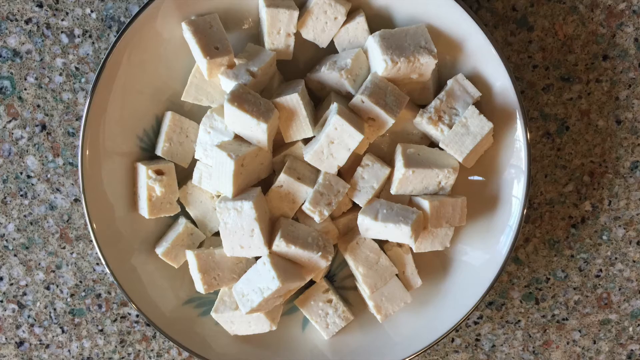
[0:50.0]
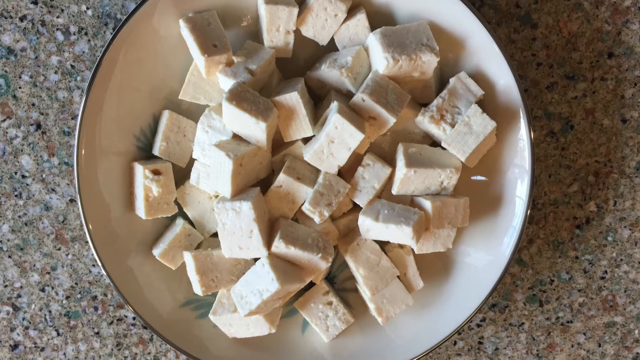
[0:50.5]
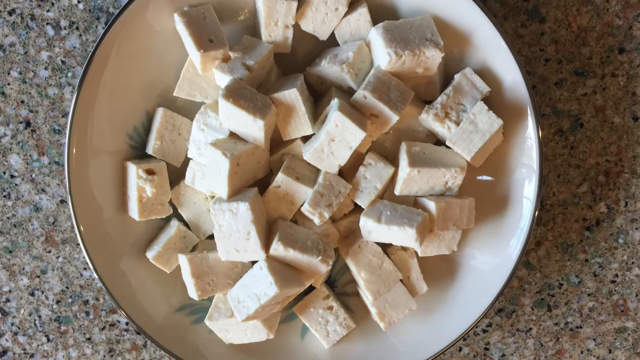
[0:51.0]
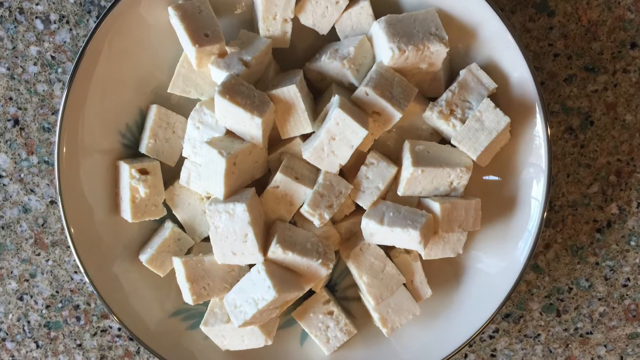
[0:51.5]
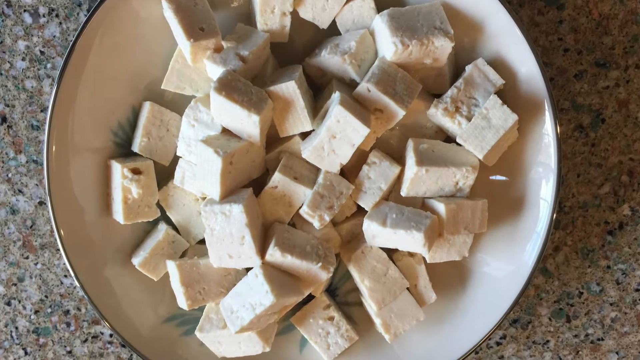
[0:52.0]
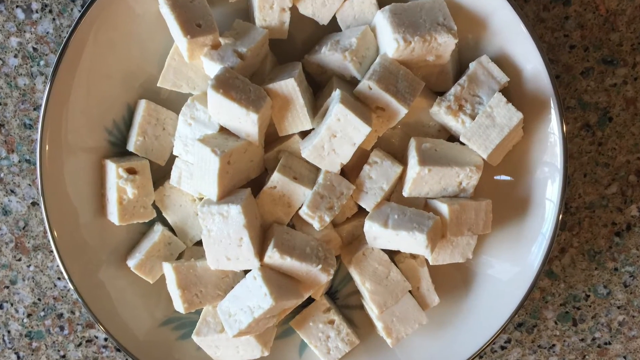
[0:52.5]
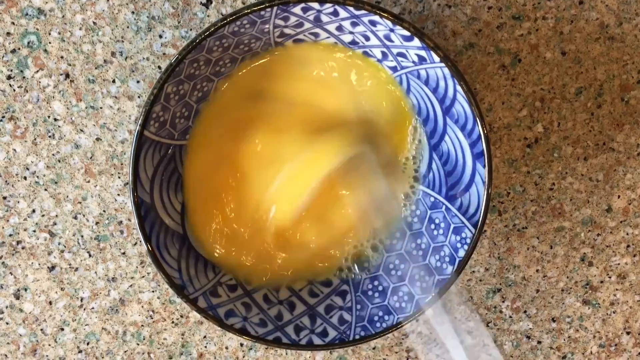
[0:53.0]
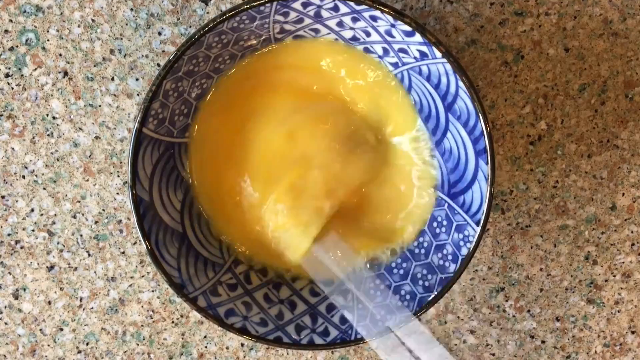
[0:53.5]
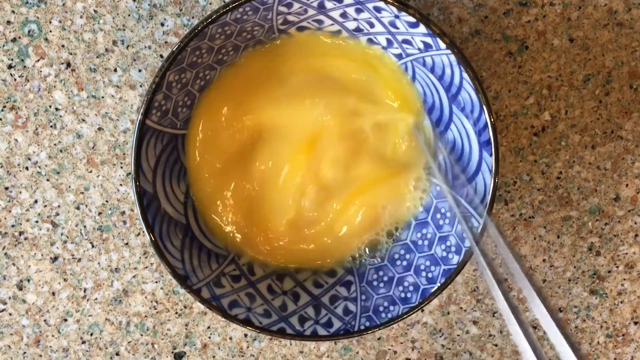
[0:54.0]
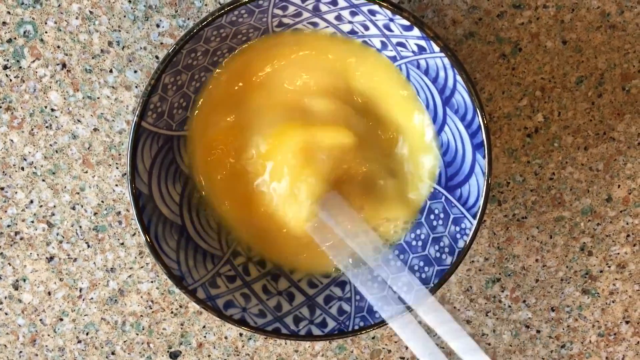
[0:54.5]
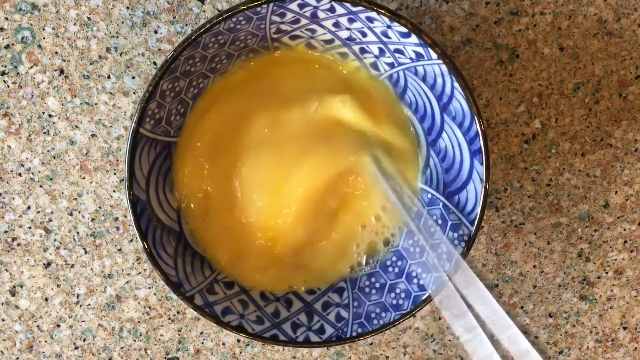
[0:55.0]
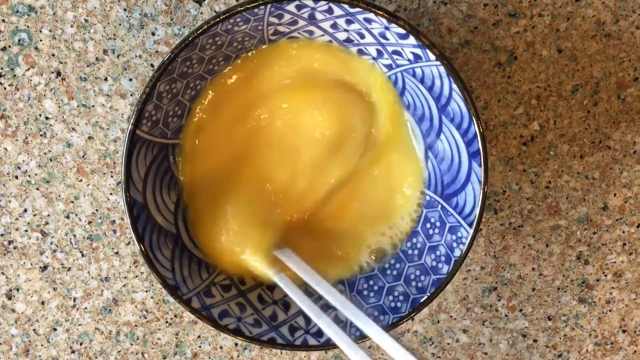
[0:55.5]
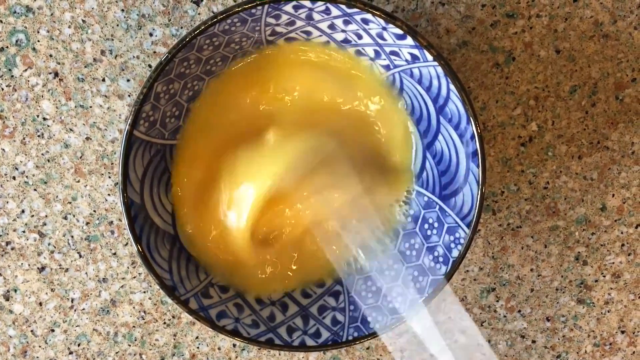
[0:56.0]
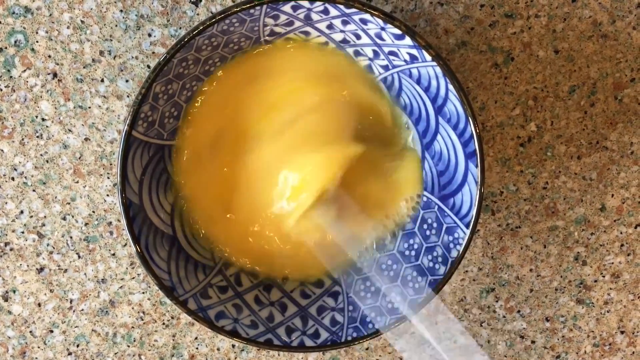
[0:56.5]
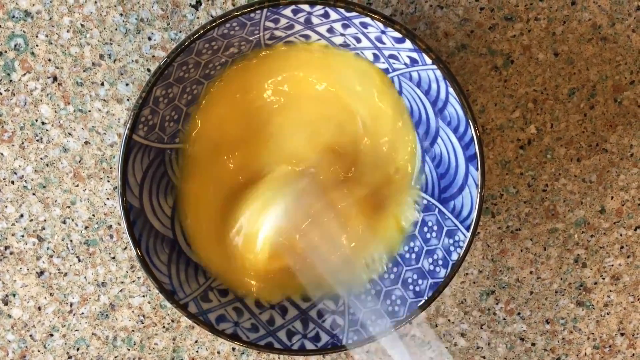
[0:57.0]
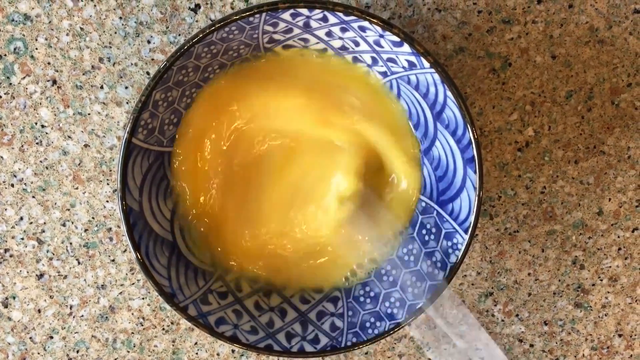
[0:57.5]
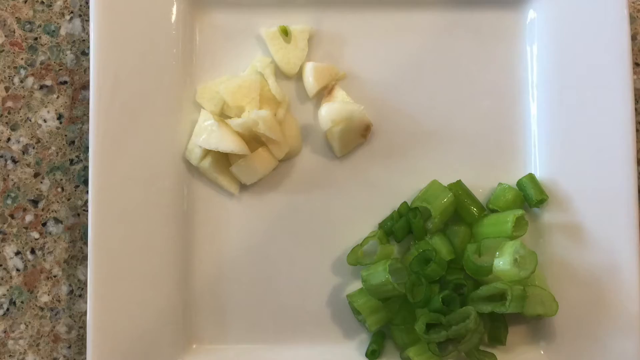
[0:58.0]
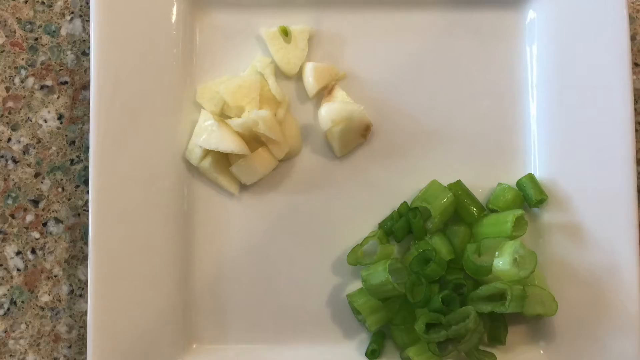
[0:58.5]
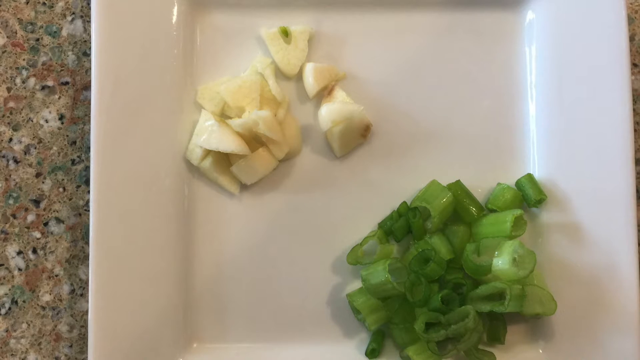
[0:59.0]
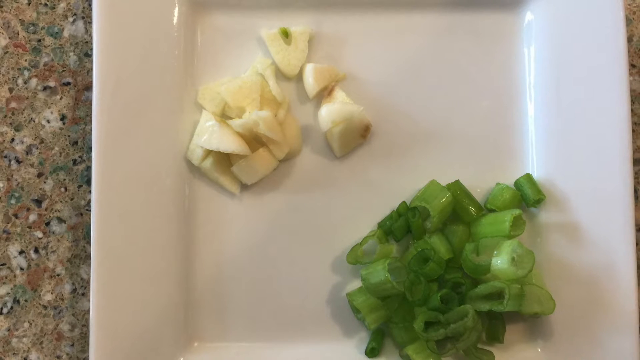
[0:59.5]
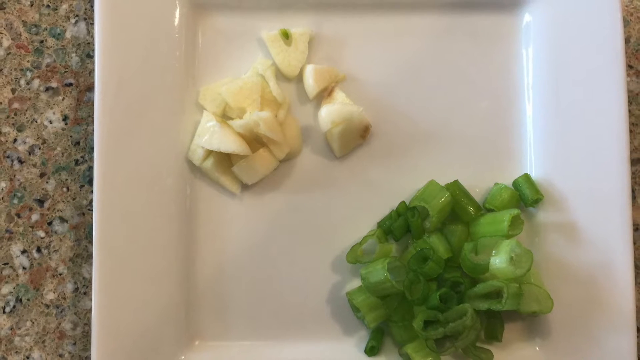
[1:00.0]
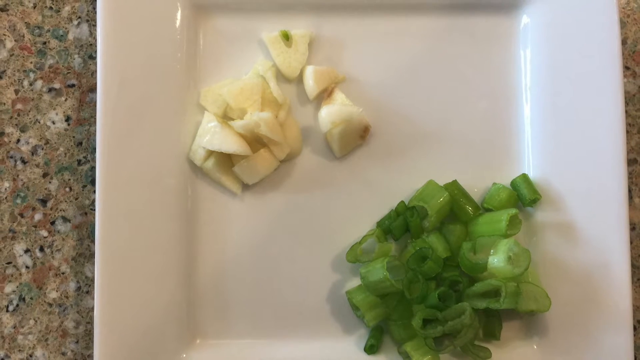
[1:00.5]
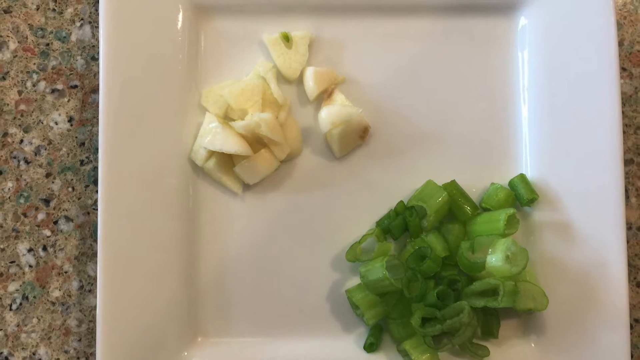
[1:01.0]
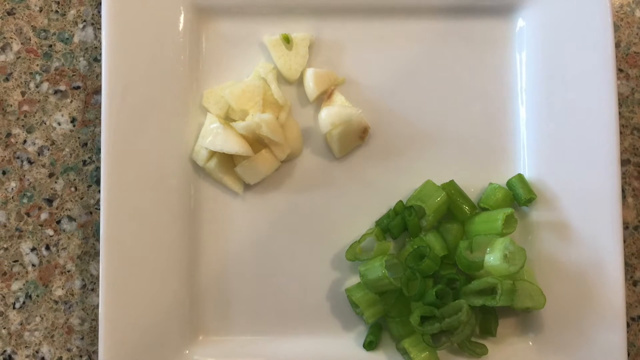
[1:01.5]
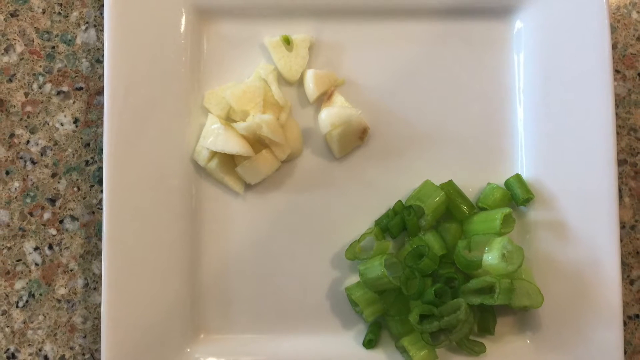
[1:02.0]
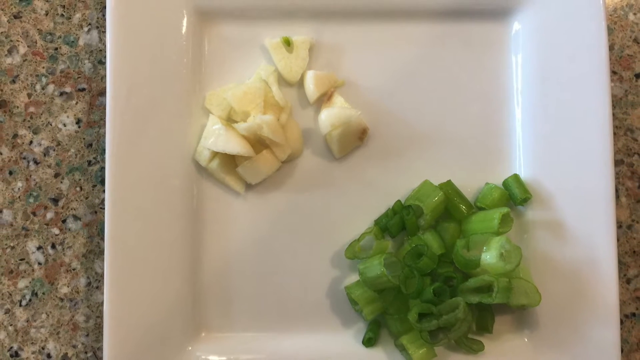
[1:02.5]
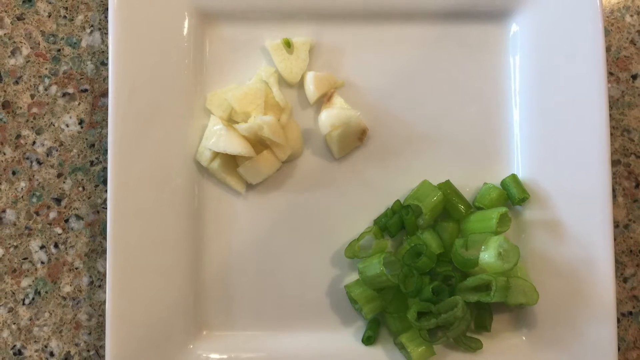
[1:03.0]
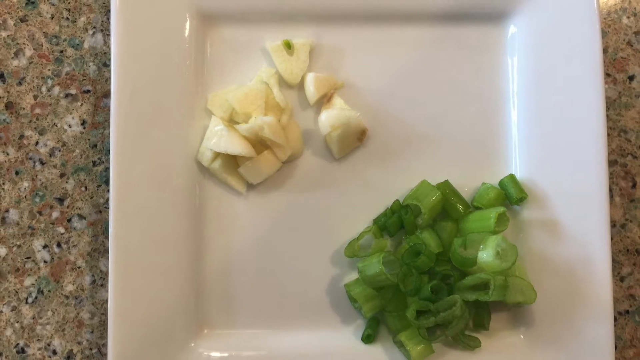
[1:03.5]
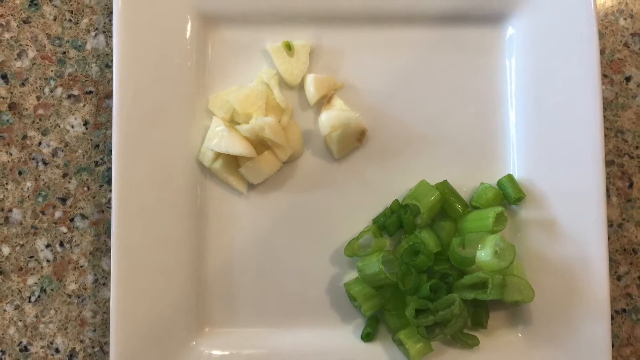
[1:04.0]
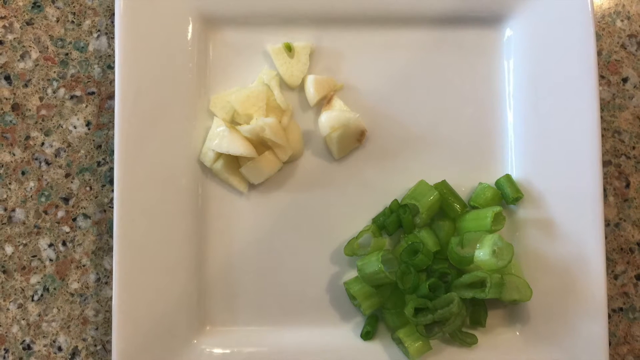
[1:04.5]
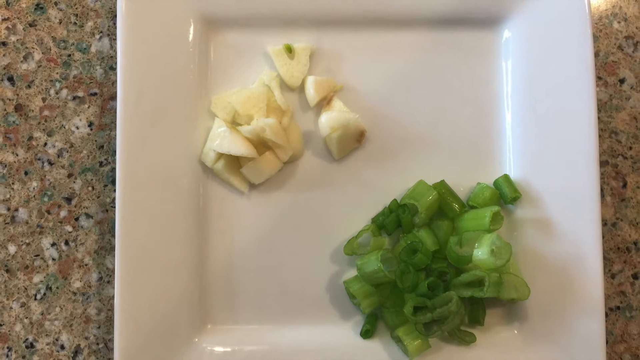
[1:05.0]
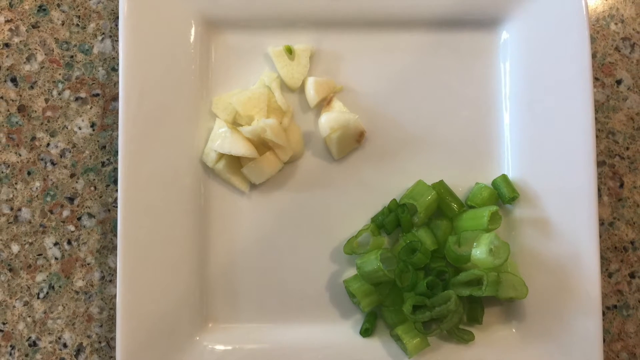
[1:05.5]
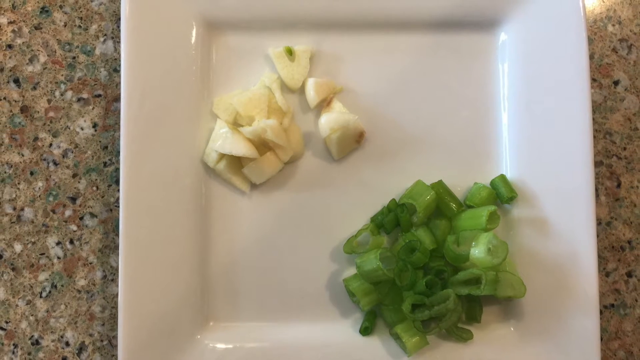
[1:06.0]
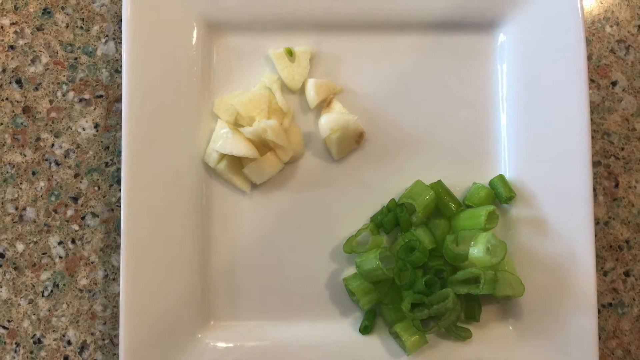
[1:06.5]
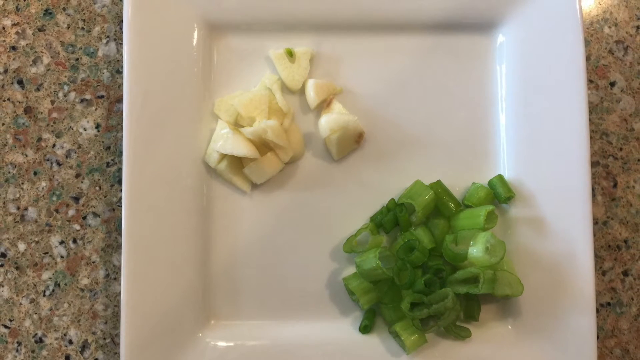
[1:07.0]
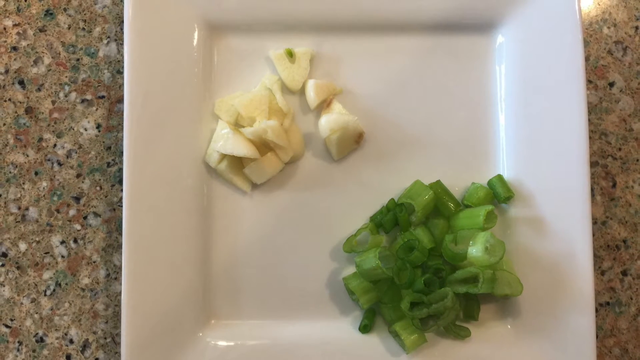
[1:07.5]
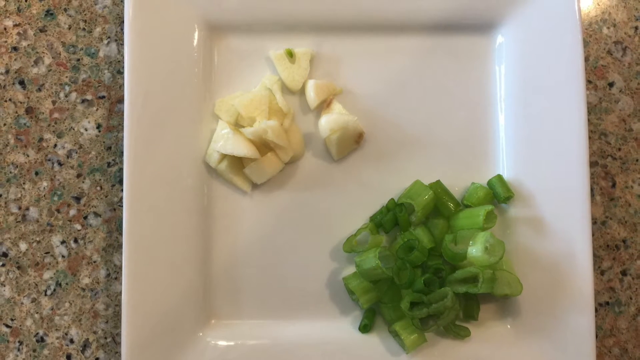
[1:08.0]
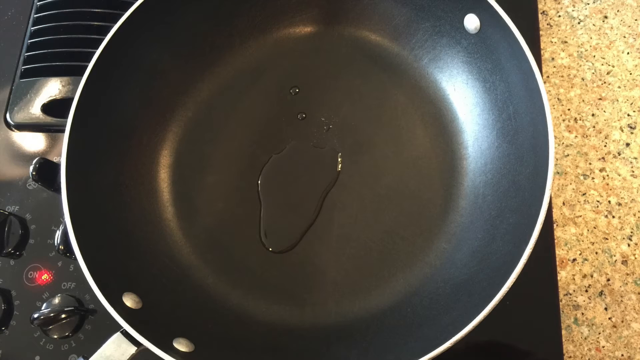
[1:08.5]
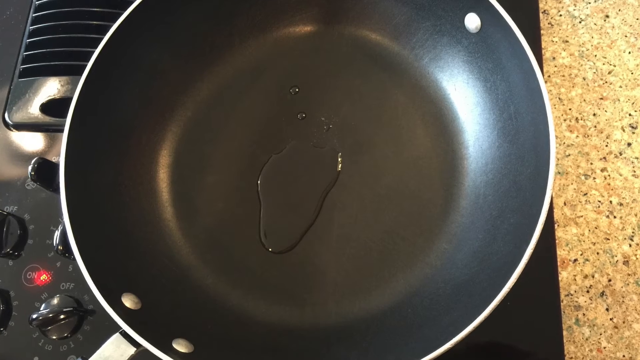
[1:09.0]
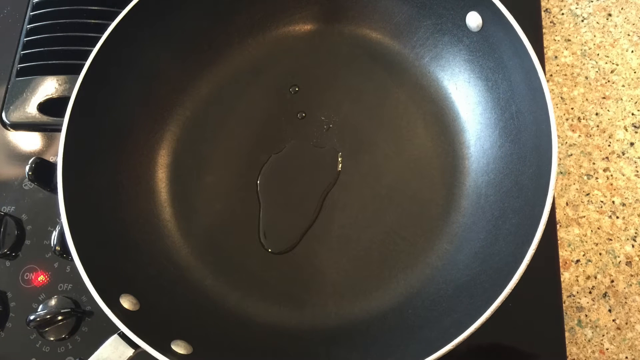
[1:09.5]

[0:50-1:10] The plate or bowl has what look like green palm-like leaves sticking out at the left and below, with some individual leaves visible, and almost a black border around its rim. There are some shadows, and the light looks natural rather than a synthetic light or bulb. The camera zooms in, showing some of the pits in the tofu; most pieces are perfectly cubed, though some are not the same size. The video quickly moves to somebody whisking egg yolks, apparently in a dish with blue and white patterns of geometric curves. Next comes a very close shot that zooms out to a beveled square plate: at the top left are about eight or ten small white pieces that look like garlic or onion, and at the bottom right are what look like green onions or celery, a very vibrant green. The right side of the plate shines a little more, vertically, while the left side and top are a more muted color. Then a blob of oil, apparently vegetable or olive oil, with a couple of dots above it, is shown in a black wok. Some of the stove dials are visible; to the left, one black dial is in the on position, with a red dot above it to indicate it is on.